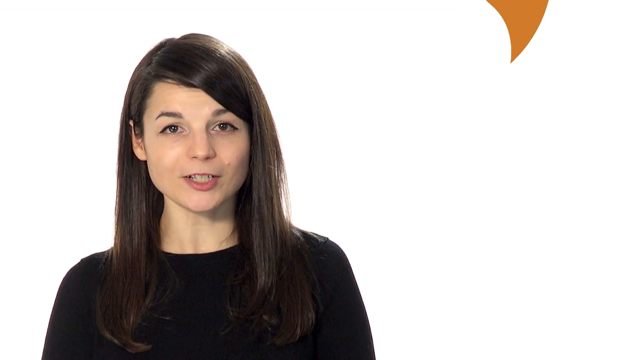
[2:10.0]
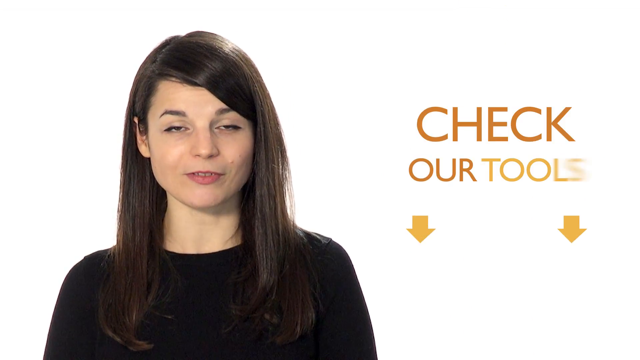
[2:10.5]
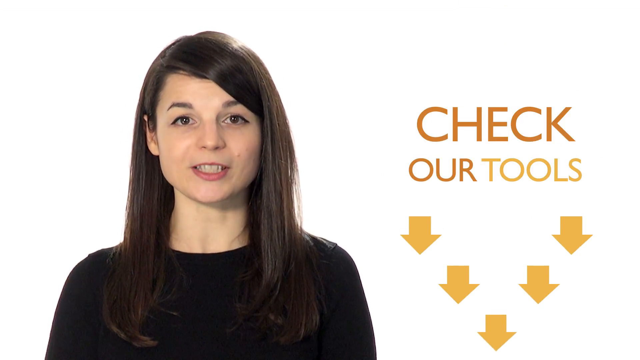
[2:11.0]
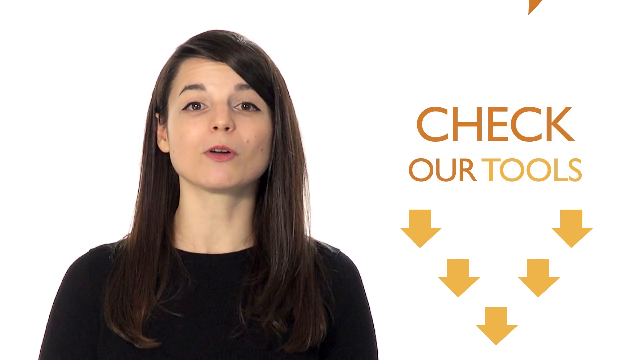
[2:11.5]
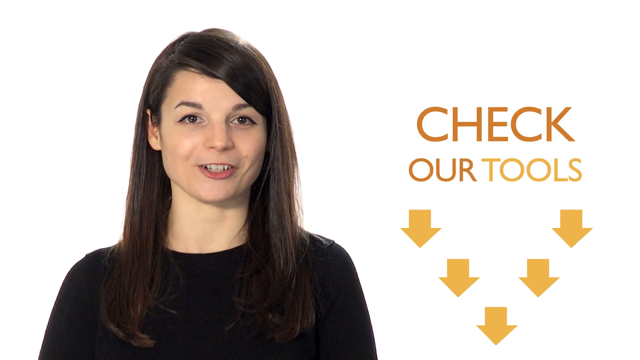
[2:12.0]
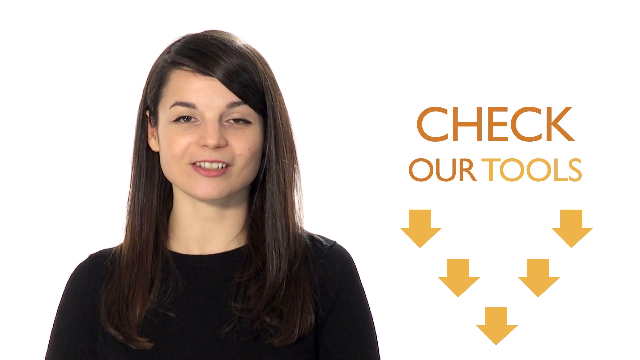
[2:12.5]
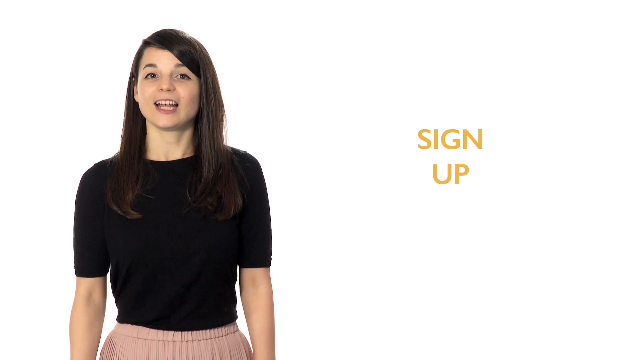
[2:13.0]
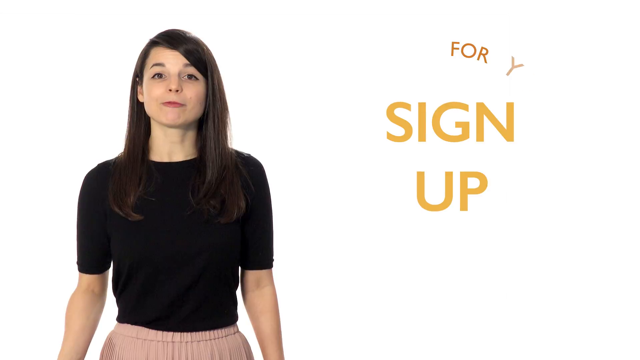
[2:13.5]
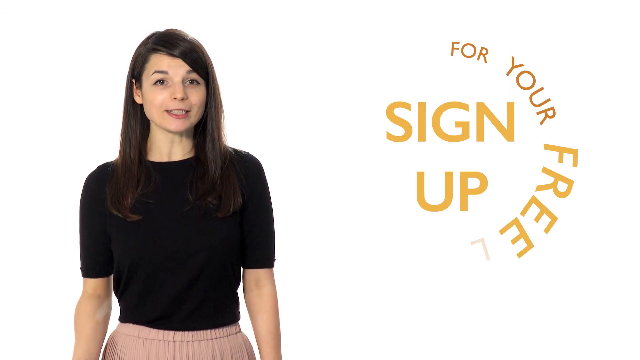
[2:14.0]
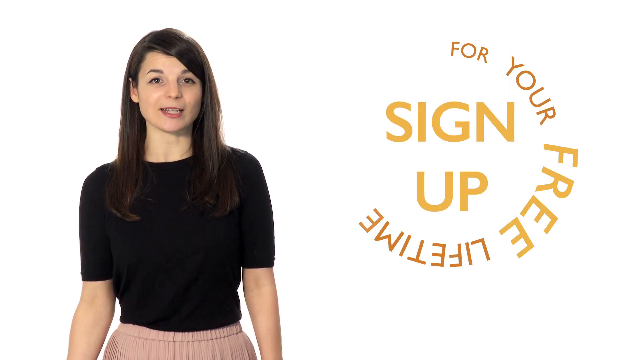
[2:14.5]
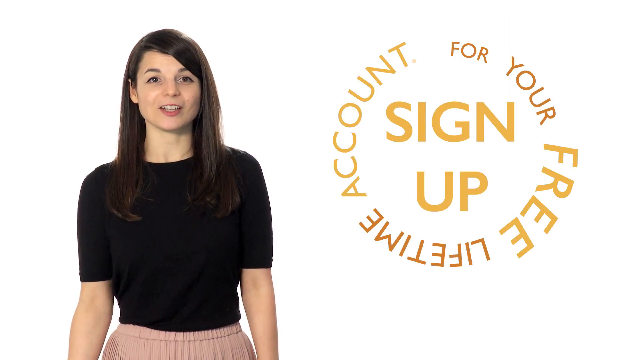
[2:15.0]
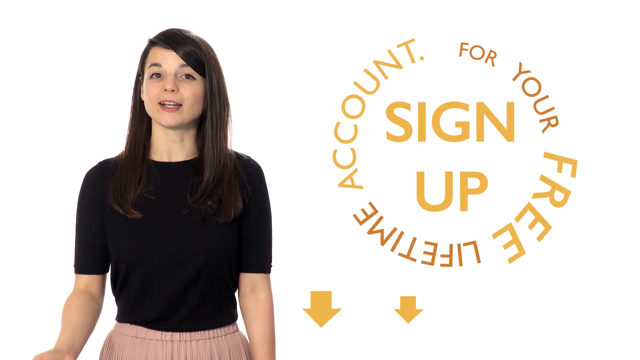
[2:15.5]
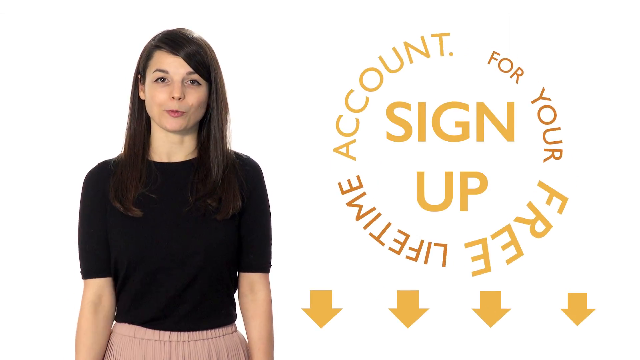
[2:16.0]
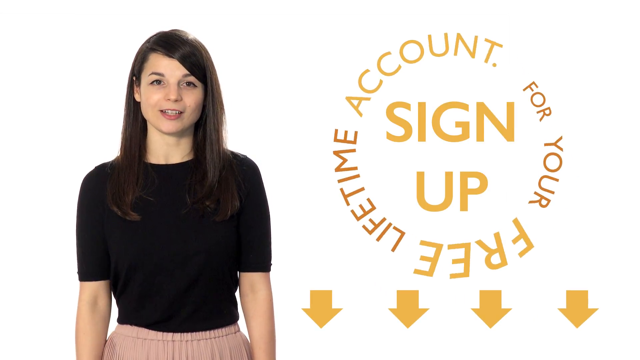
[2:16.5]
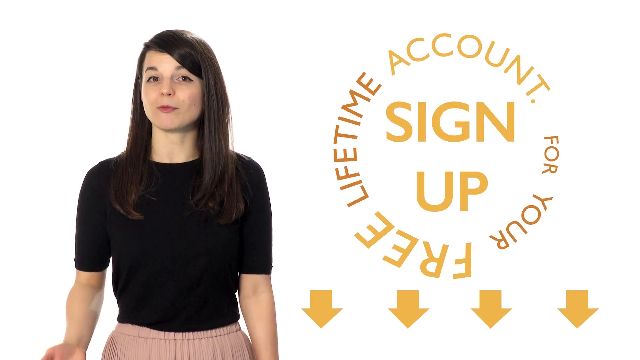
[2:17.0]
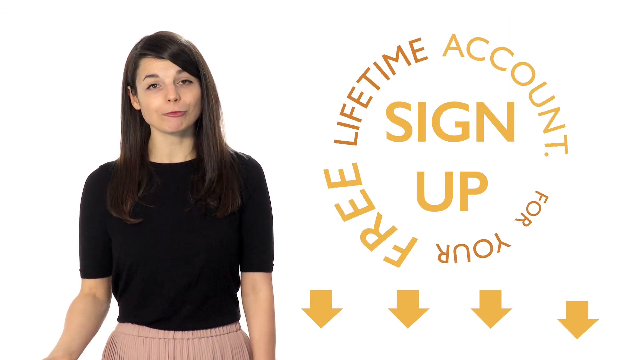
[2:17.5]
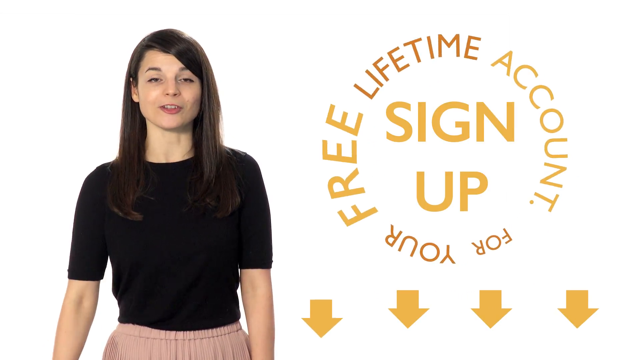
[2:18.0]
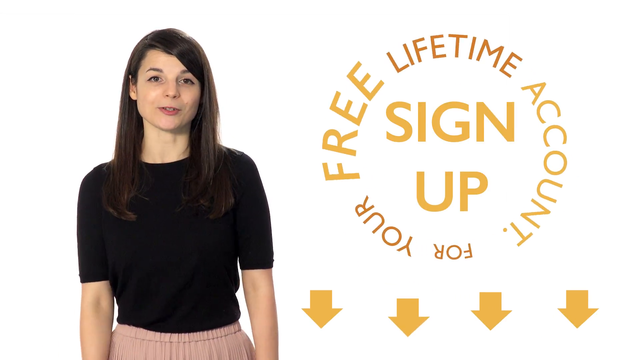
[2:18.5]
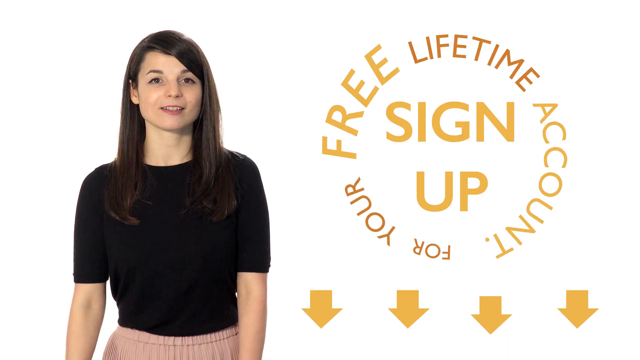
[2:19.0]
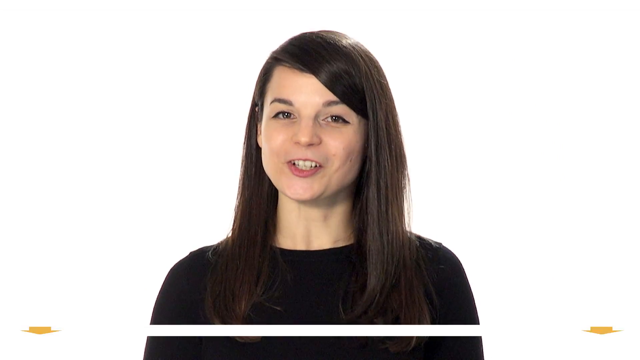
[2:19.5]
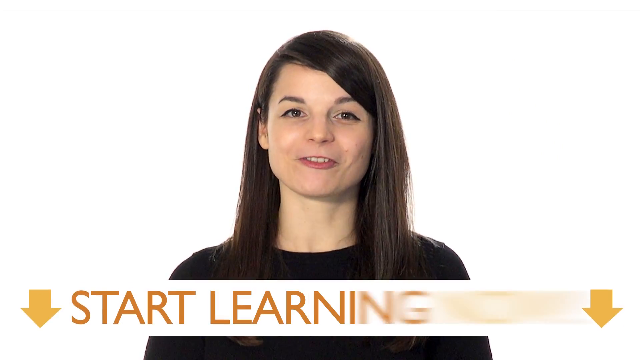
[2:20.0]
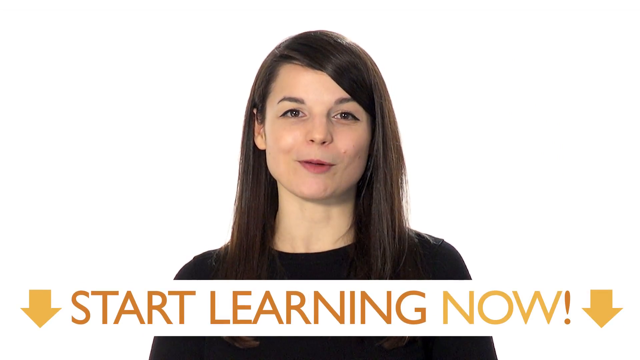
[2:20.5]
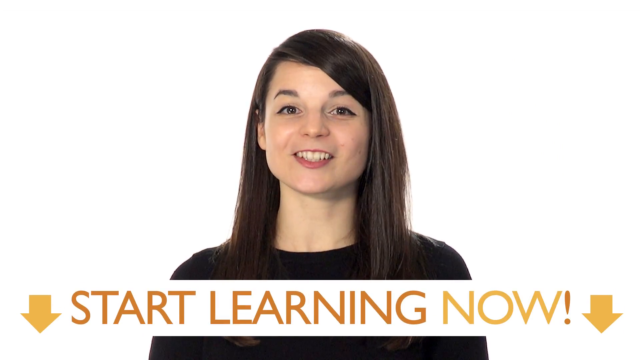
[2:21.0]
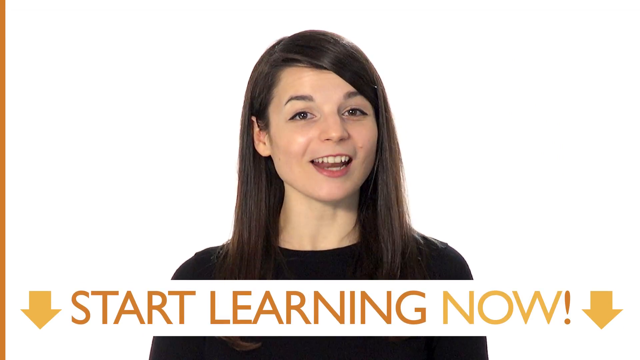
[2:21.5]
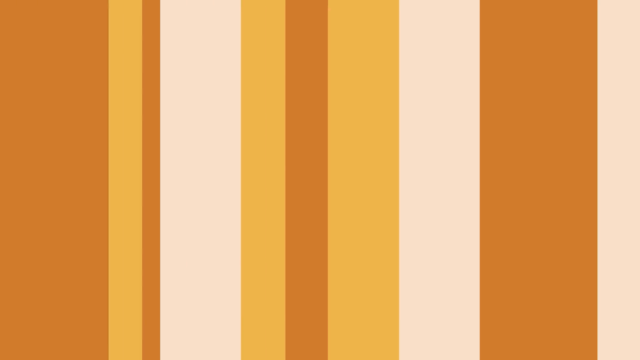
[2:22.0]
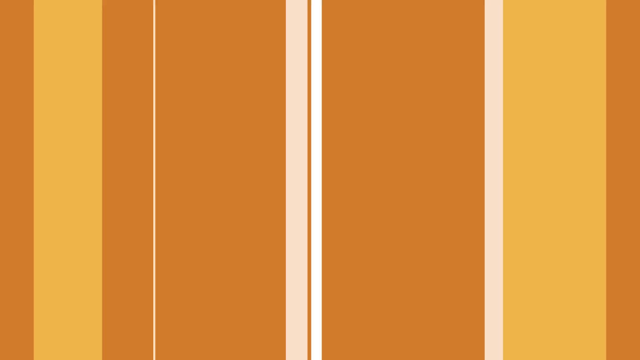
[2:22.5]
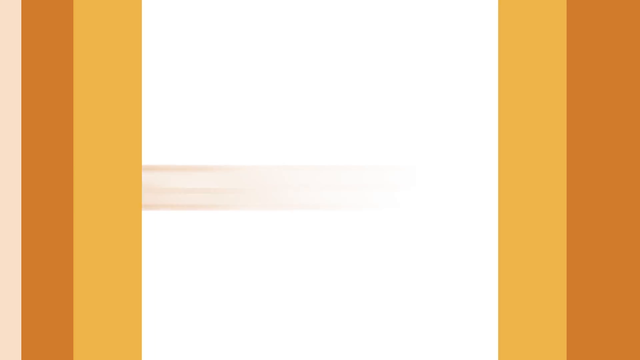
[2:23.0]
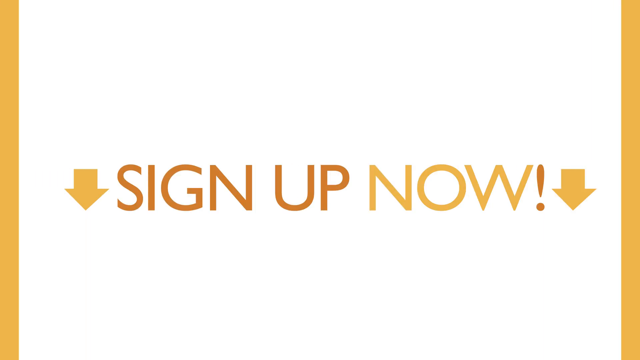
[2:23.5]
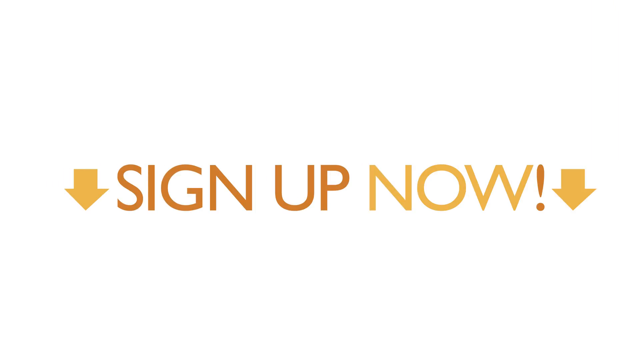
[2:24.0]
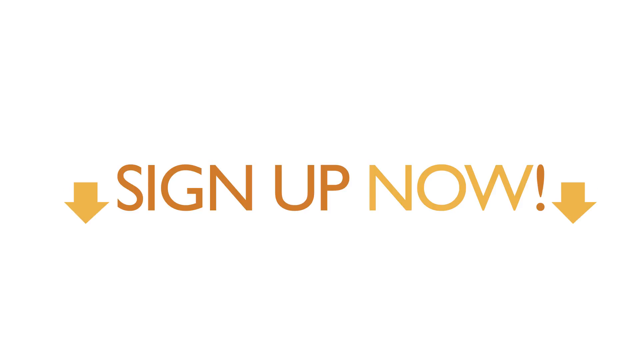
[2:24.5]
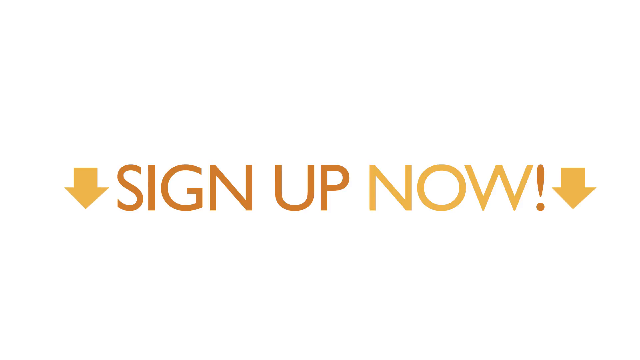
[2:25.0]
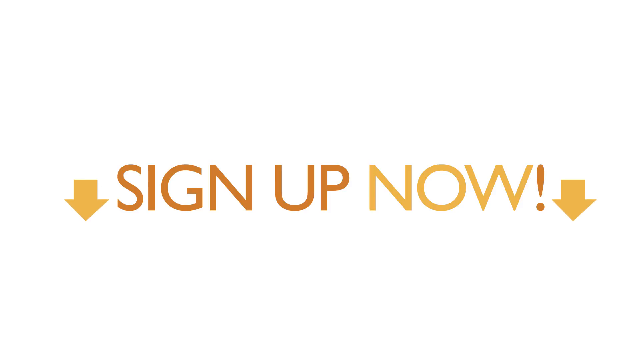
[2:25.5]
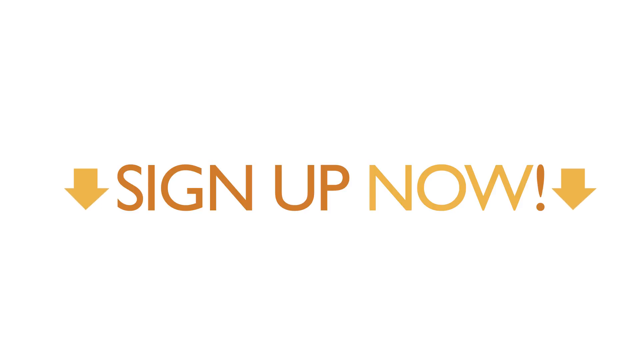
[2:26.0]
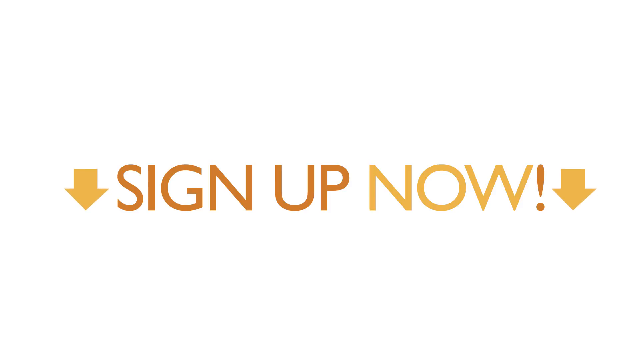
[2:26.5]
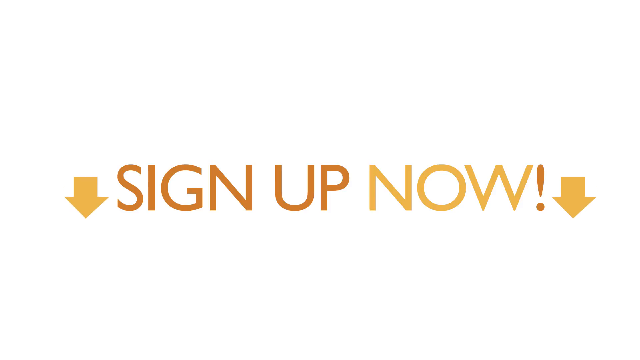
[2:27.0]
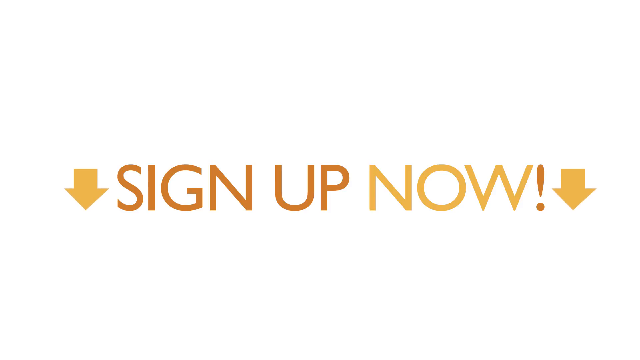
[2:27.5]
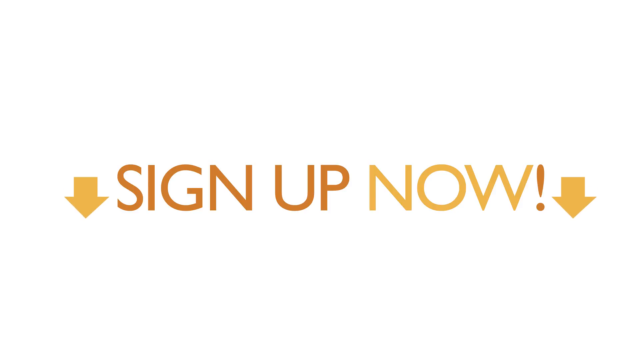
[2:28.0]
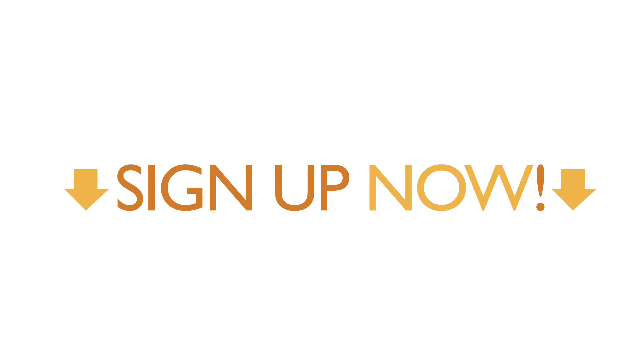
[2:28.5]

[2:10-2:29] A young woman wearing a black top stands before a whiteboard, presenting on languages. The main title reads "top four language learning fears according to our users"; it is written in bold white, with "top four" underlined, on a yellow background. She elaborates for a while, then the challenges are numbered, and number one reads "I am not good enough to start speaking yet." She elaborates, then a written solution appears: "the best way to get good at speaking is to start speaking at day one." Number two reads "I am afraid I'll not get fluent," and after she elaborates for a while, a written solution appears.